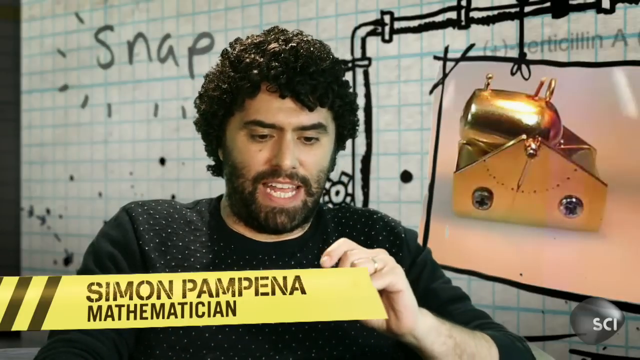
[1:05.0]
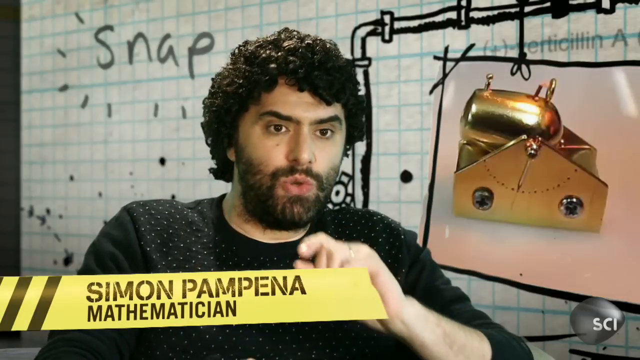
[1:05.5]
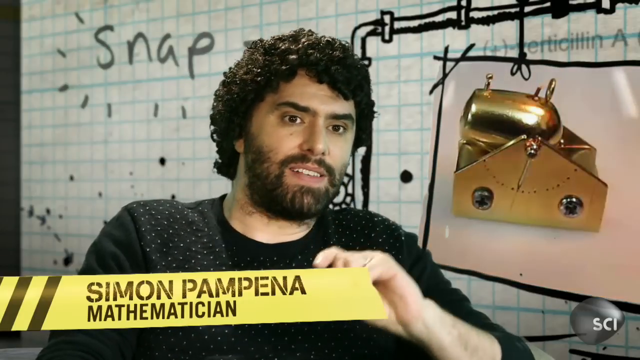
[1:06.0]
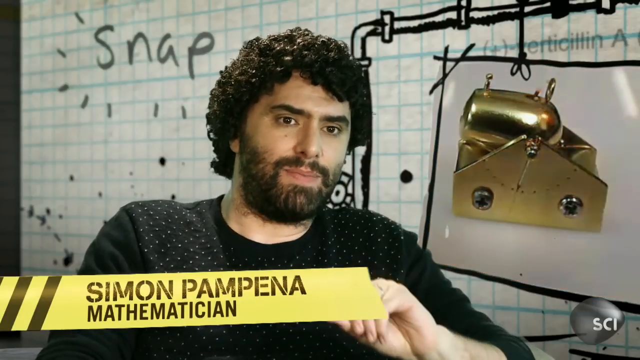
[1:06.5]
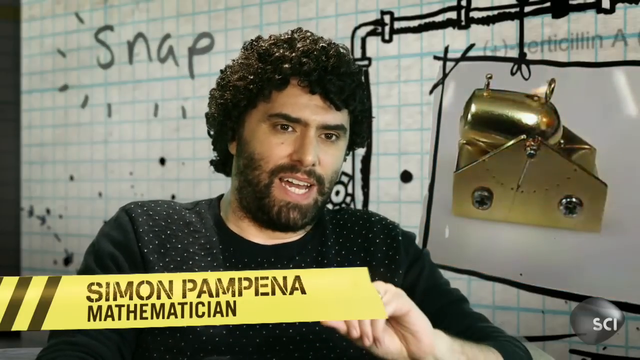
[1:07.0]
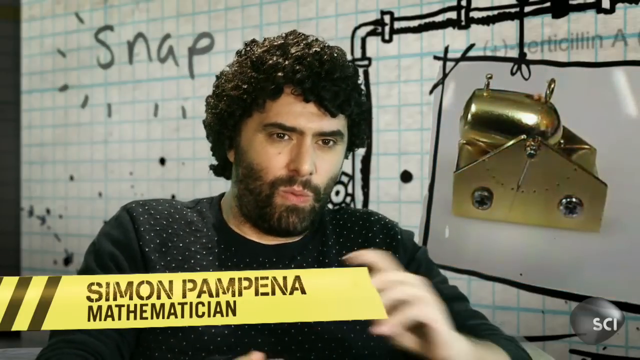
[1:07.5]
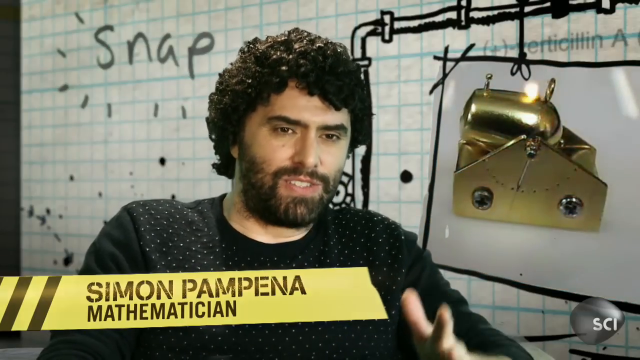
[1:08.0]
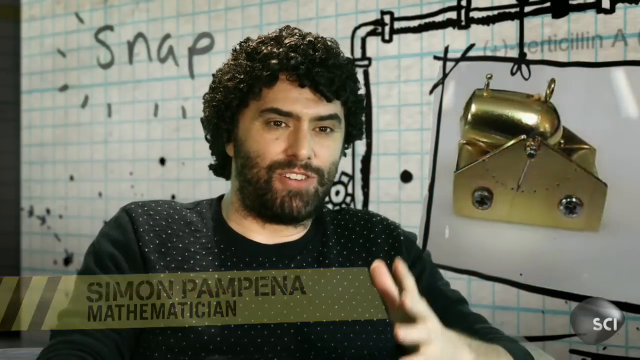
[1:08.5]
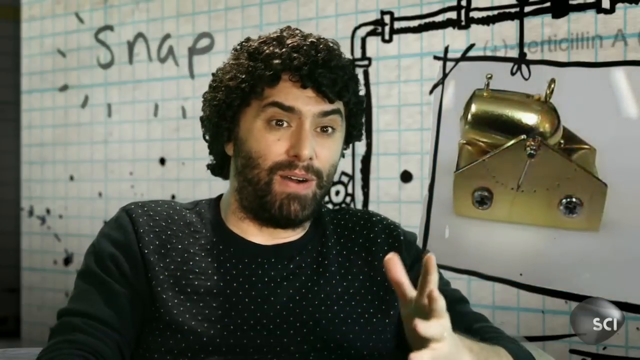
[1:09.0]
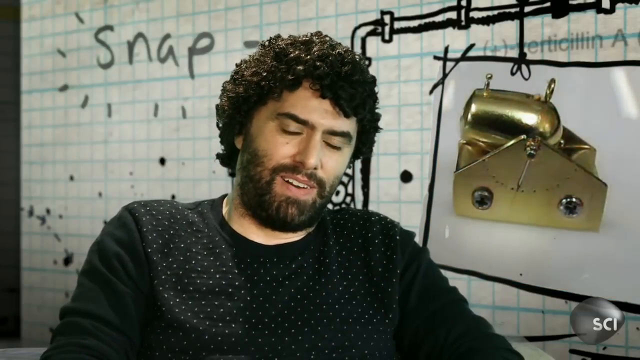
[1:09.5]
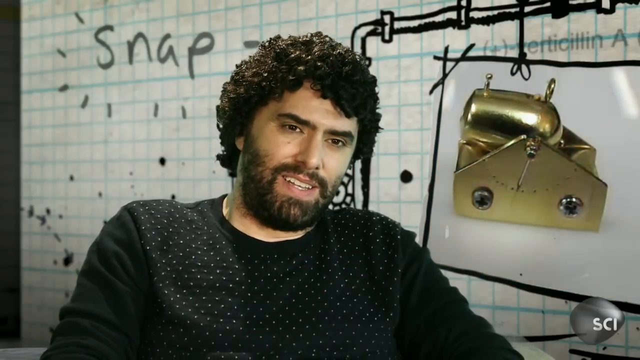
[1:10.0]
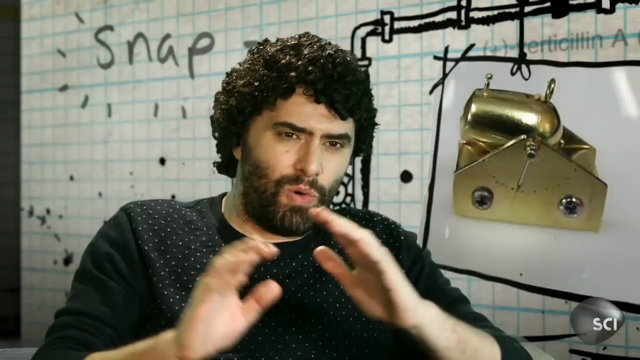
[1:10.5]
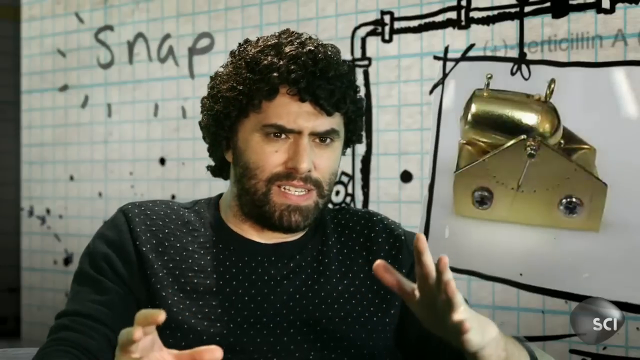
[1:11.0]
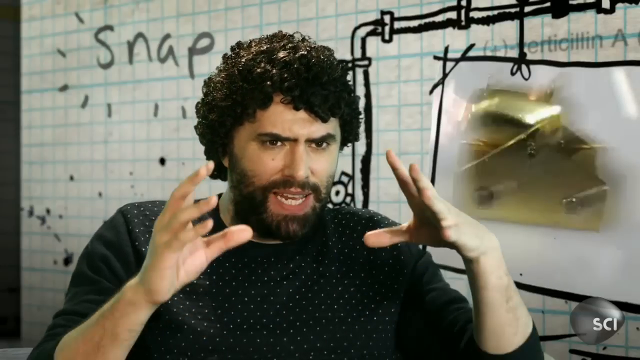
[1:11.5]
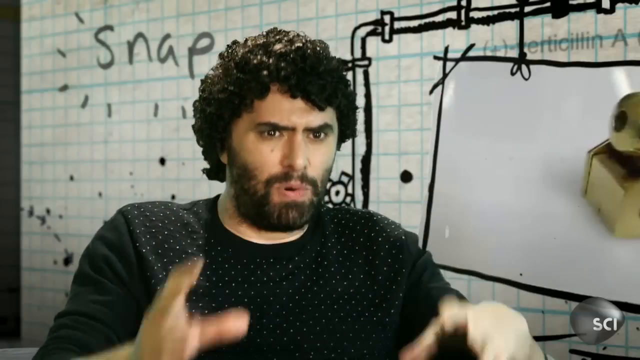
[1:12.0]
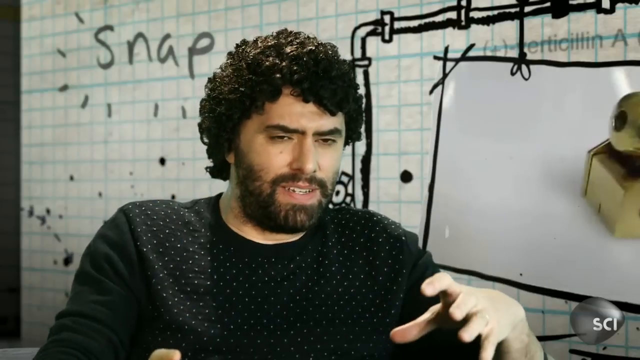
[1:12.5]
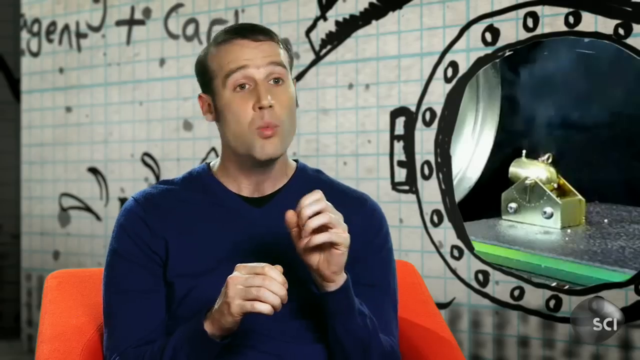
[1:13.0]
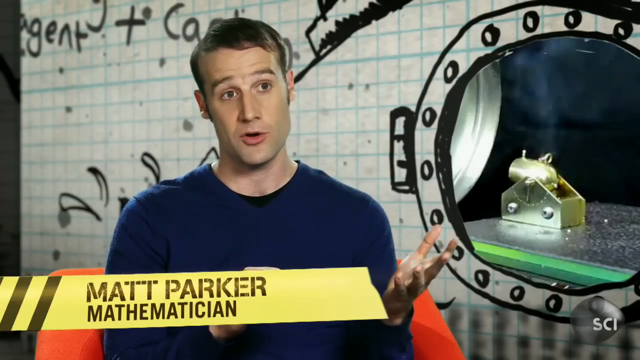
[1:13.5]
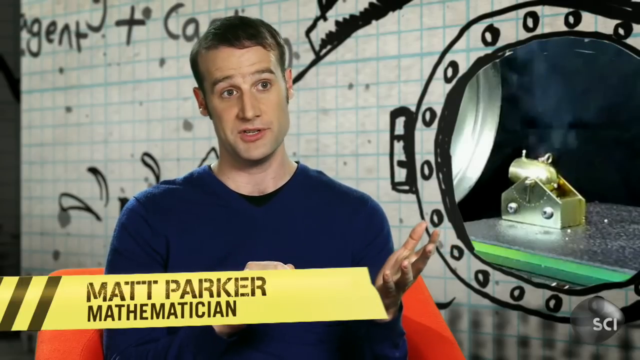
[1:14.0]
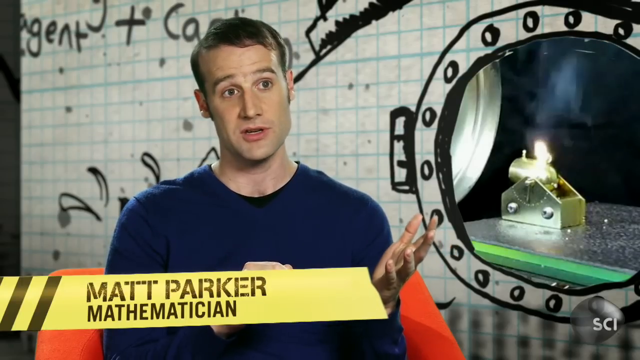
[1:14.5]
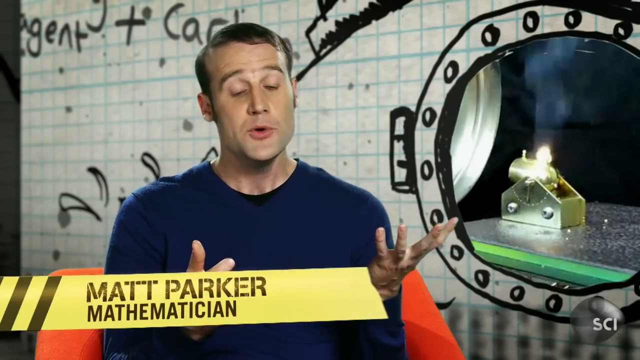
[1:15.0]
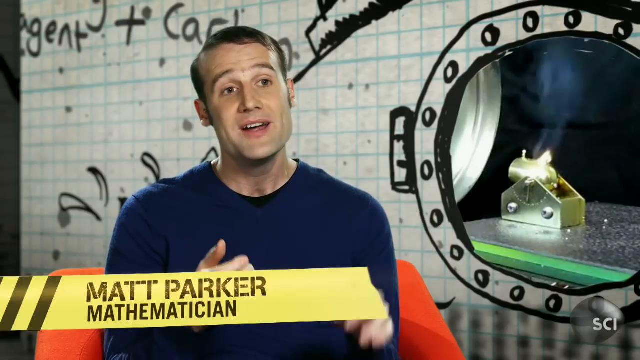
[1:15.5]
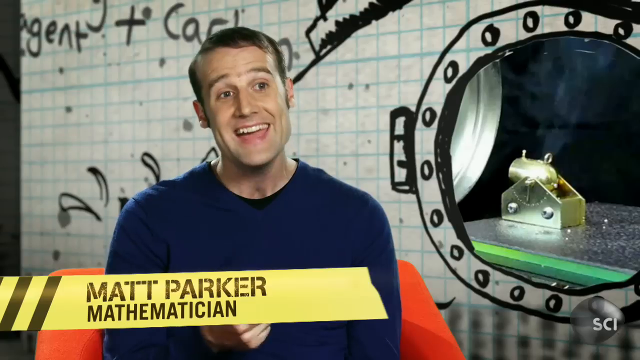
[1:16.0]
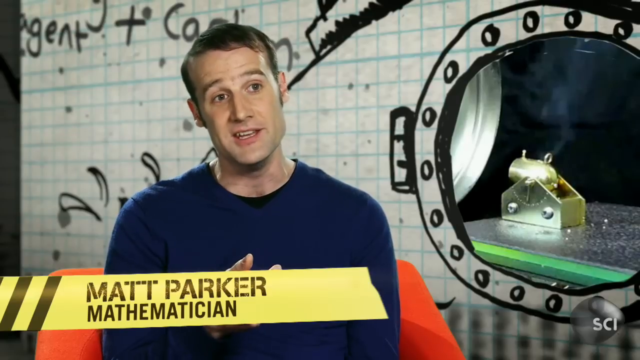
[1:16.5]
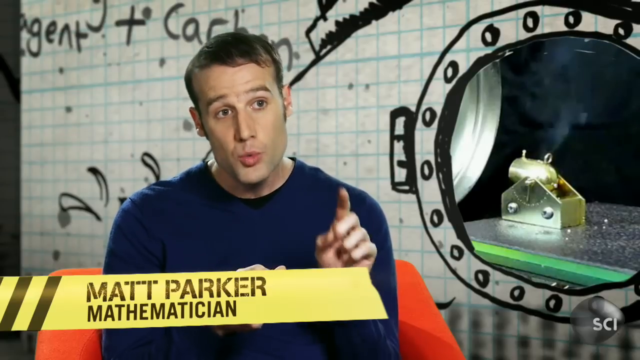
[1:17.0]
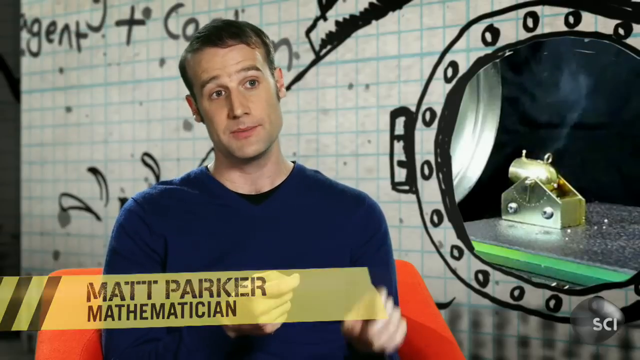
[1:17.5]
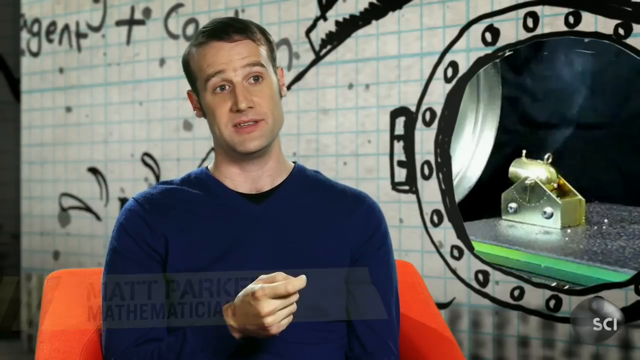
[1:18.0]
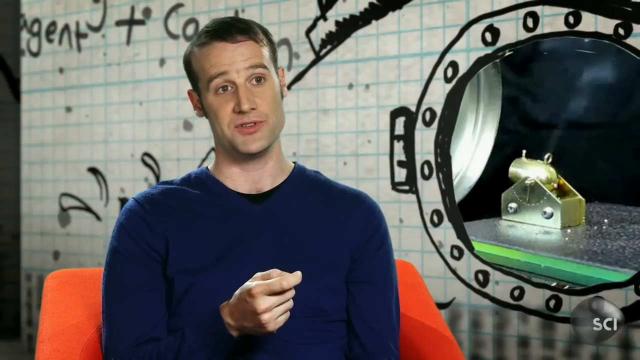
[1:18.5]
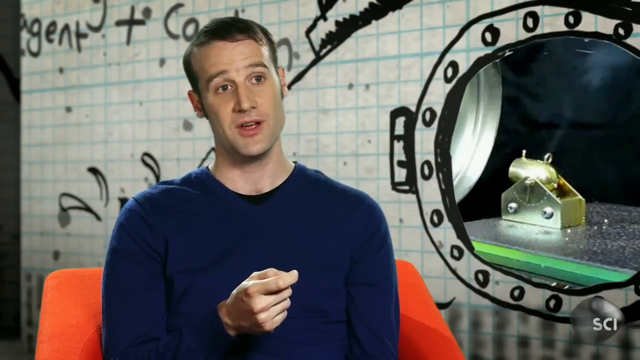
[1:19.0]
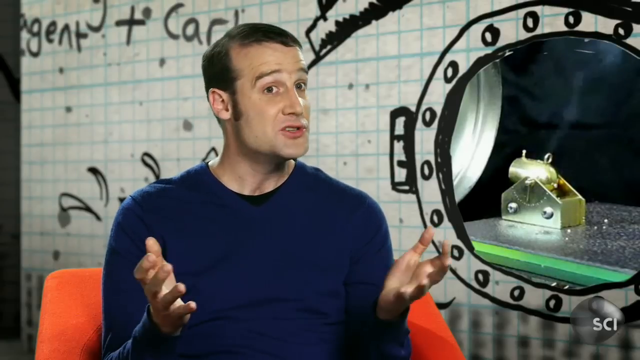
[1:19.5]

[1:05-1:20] A man with a beard in a black shirt talks, labeled "Simon Pepina" and also identified as a mathematician. Another man in a blue shirt is labeled "Matt Parker, a mathematician". While they talk, a picture of the little cannon appears on the right side. The video cuts back and forth between the two mathematicians. Behind the bearded man is a paper that seems to say "snap". Behind the man in the blue shirt is a paper with writing and drawings on it, partly covered by his head. A man in a white shirt uses his hands a lot, and the man in the blue shirt also uses his hands quite a bit.